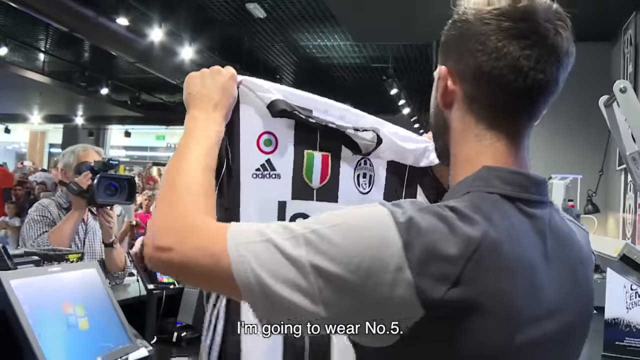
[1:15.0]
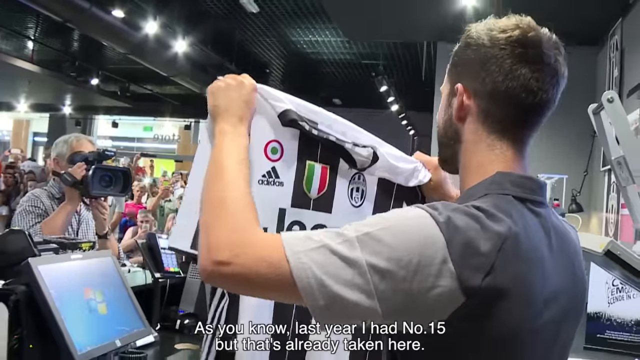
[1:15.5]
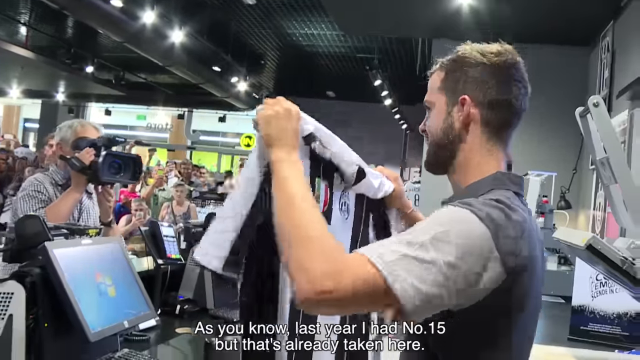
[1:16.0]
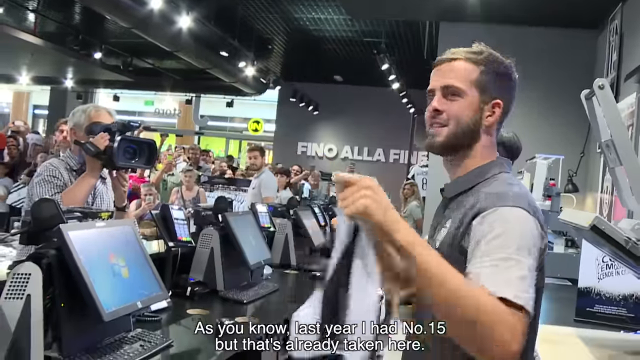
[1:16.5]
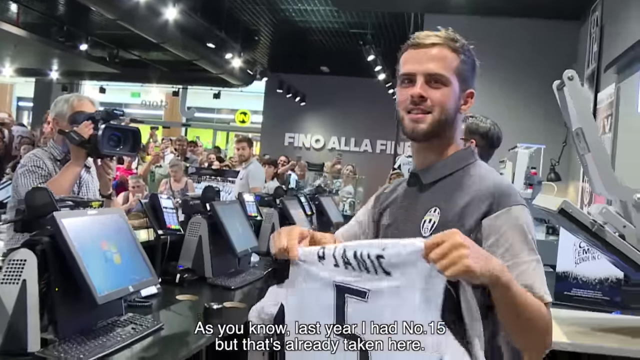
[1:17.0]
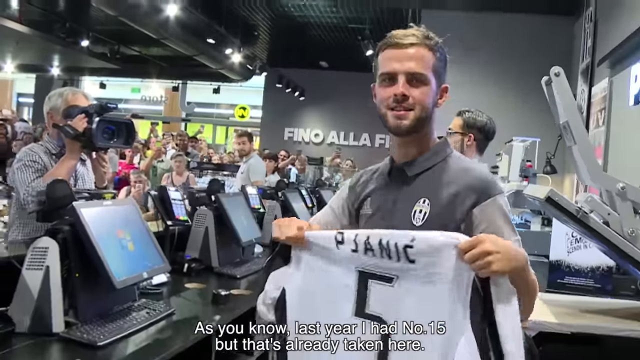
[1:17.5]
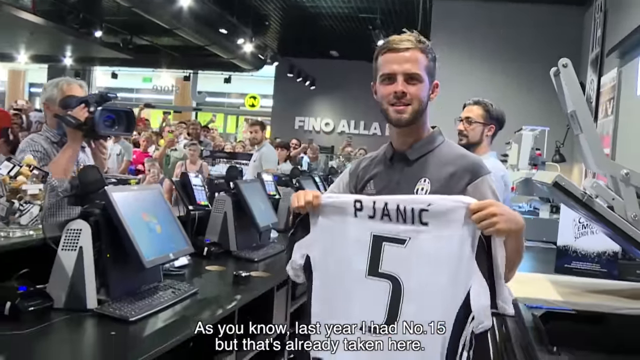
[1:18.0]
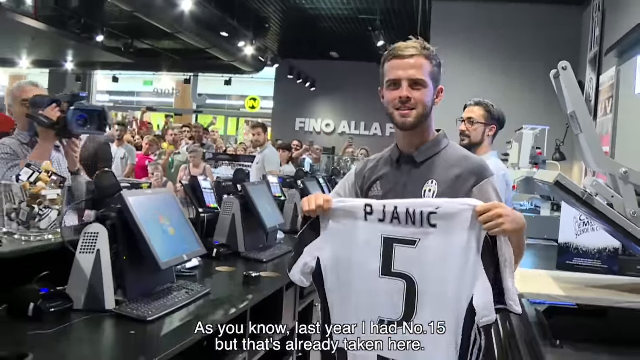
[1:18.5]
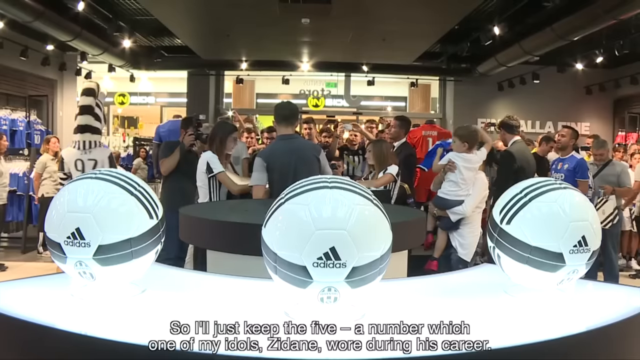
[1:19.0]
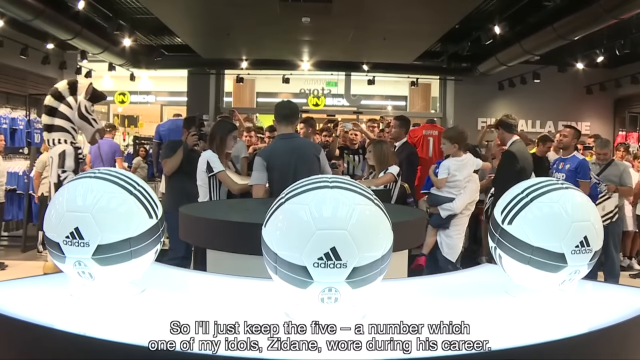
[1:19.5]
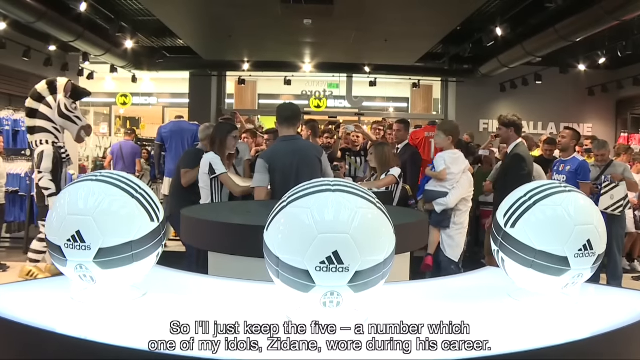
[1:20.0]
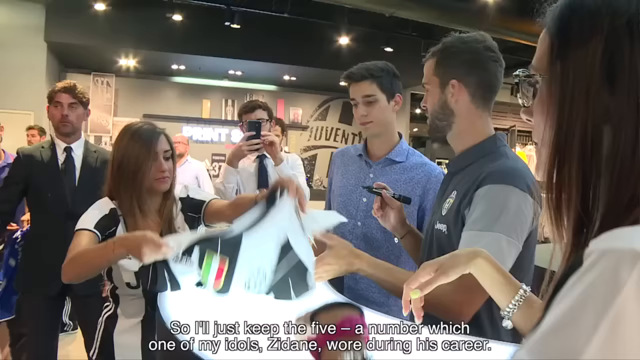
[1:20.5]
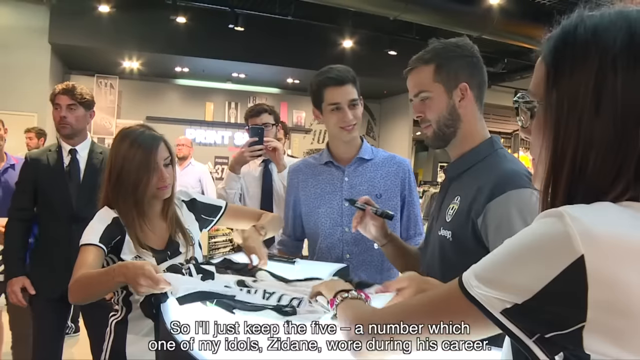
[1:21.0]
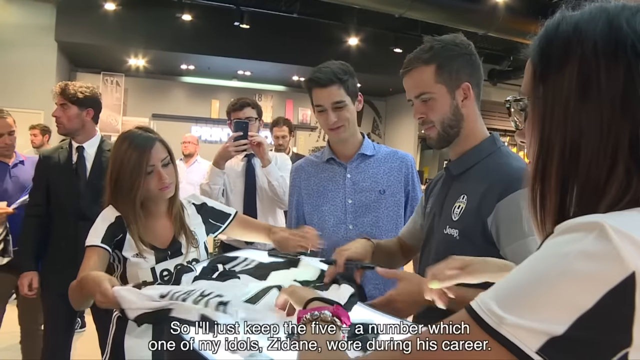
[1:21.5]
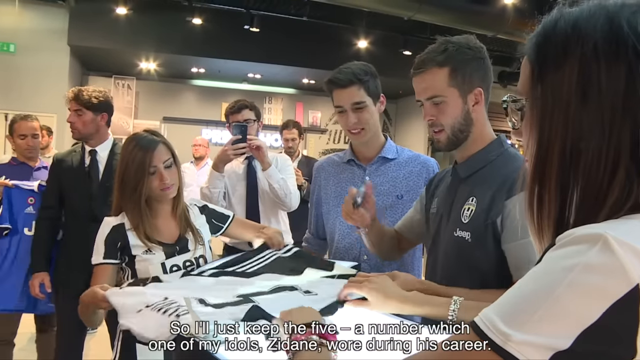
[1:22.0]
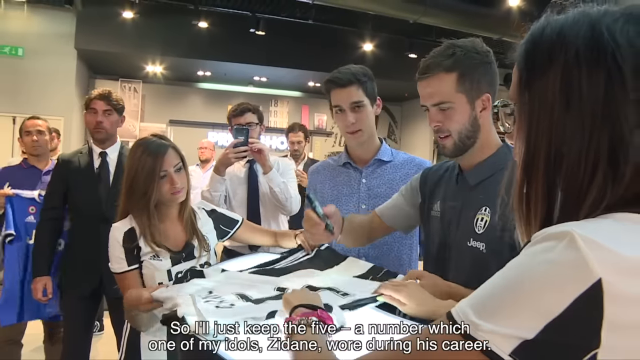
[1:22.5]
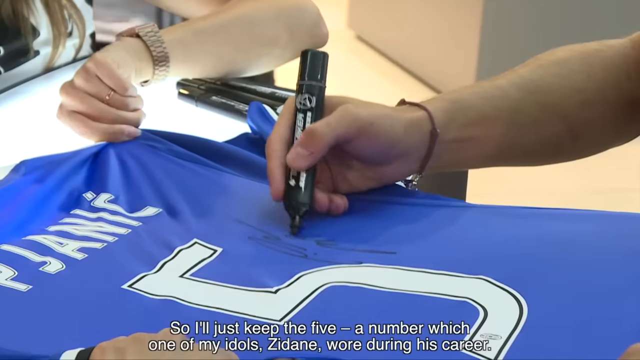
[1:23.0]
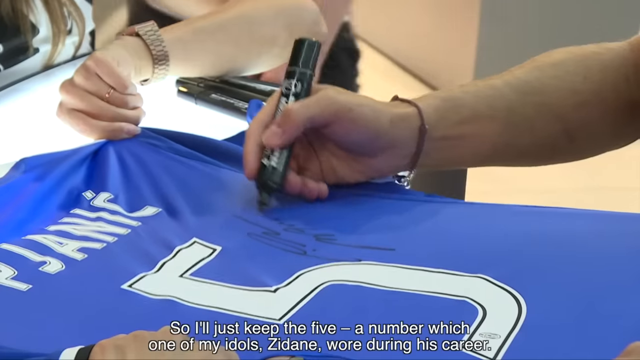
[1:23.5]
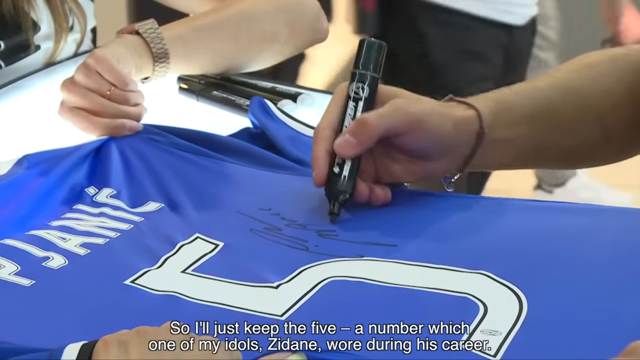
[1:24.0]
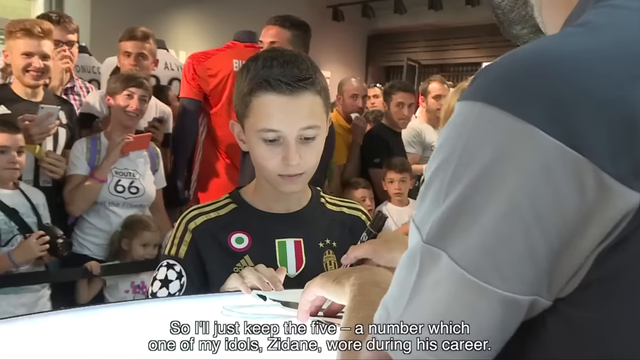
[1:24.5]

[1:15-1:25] Indoors, the soccer player holds up a white jersey that has a Jeep logo and an Adidas logo on the front and appears to also have an Italian flag on it. He holds it up with both hands, apparently to show the media. Media members holding large cameras take photographs and videos of him holding the jersey. The jersey shows the last word "JANIC" written on it. The man is then shown autographing jerseys for fans, and a little boy waits to get an autograph from him.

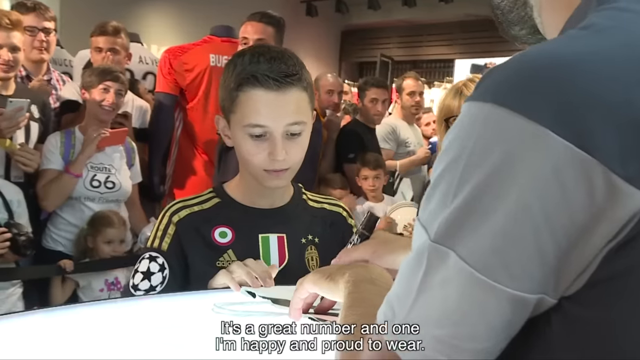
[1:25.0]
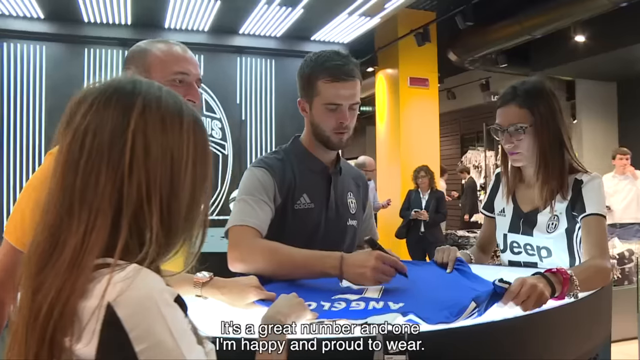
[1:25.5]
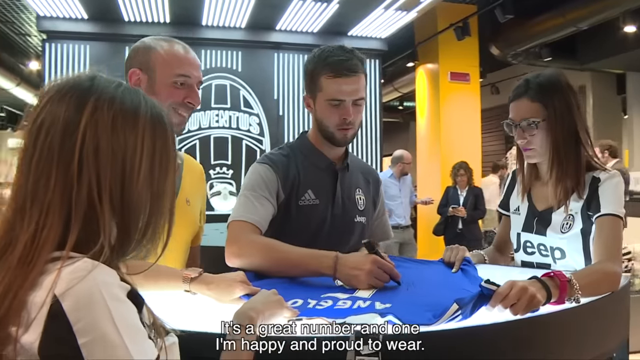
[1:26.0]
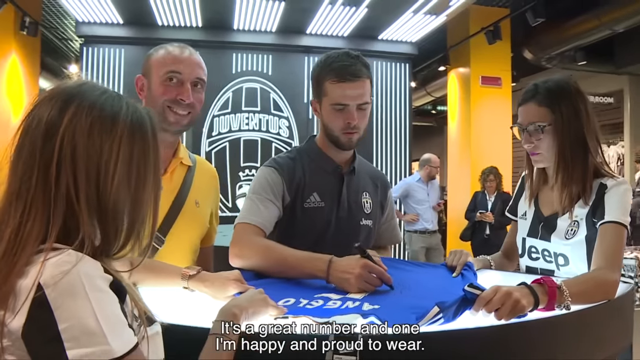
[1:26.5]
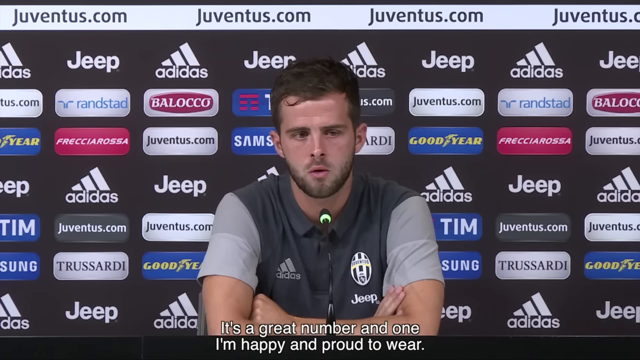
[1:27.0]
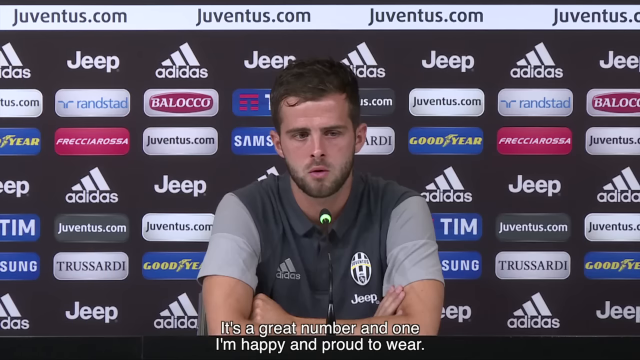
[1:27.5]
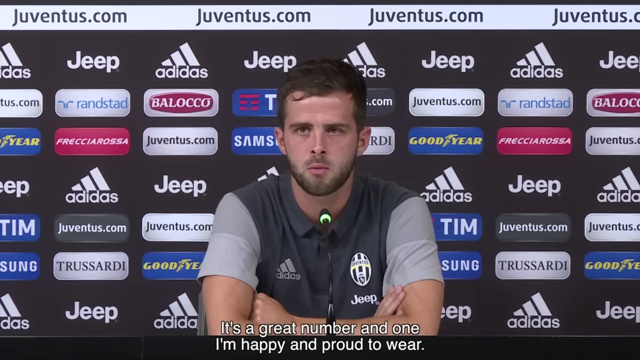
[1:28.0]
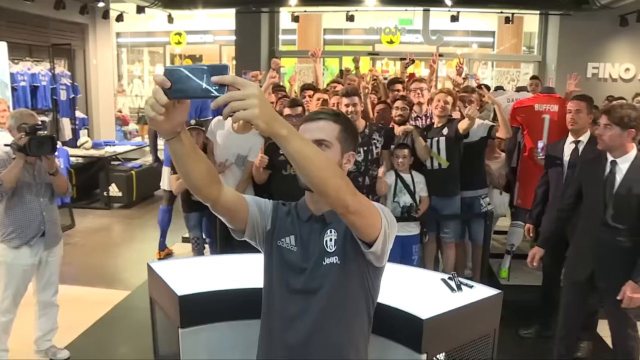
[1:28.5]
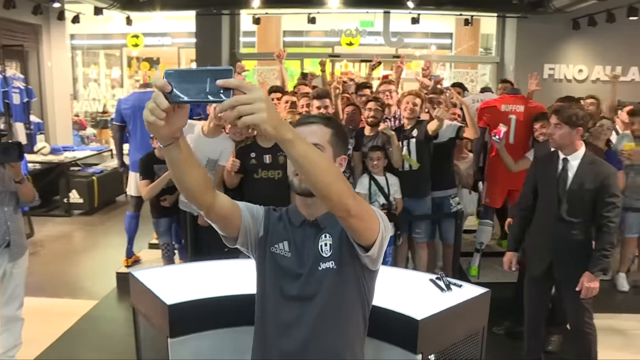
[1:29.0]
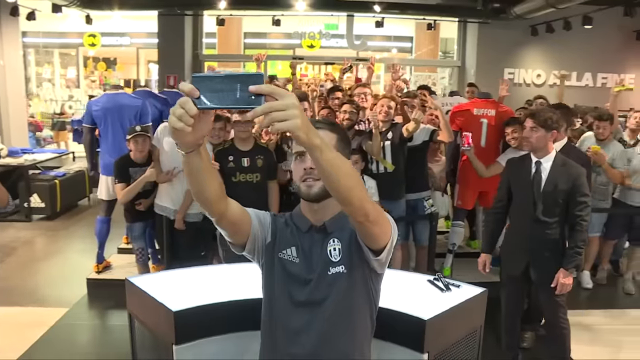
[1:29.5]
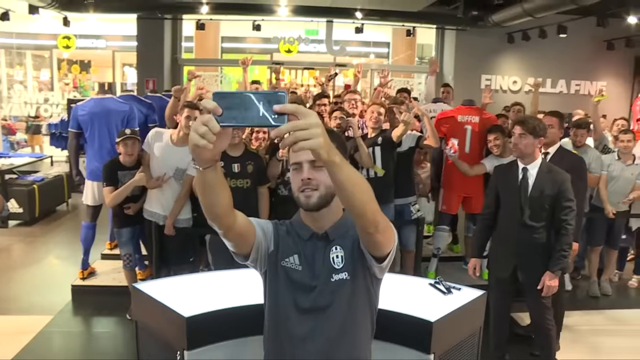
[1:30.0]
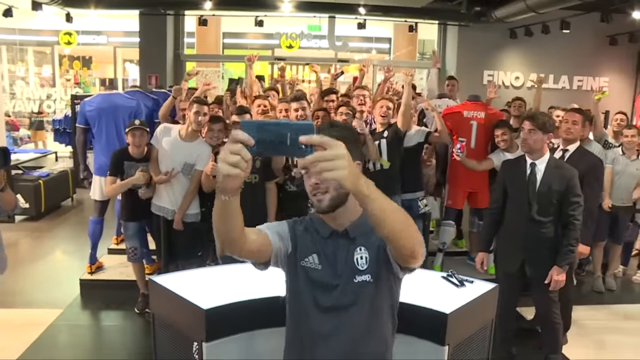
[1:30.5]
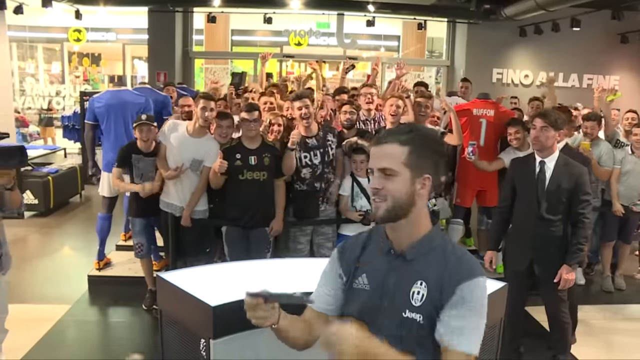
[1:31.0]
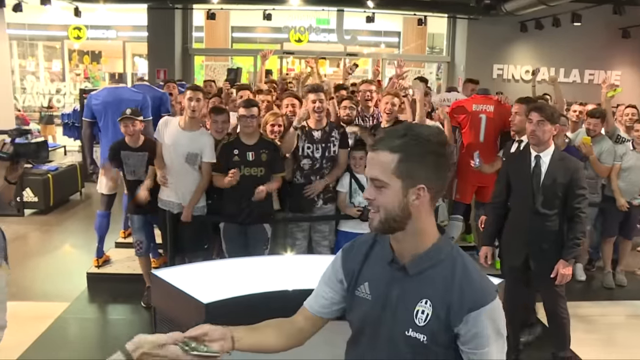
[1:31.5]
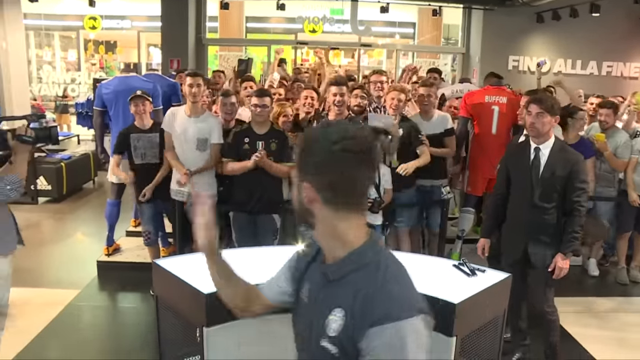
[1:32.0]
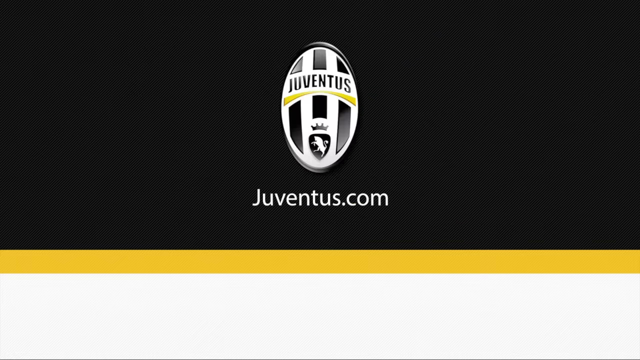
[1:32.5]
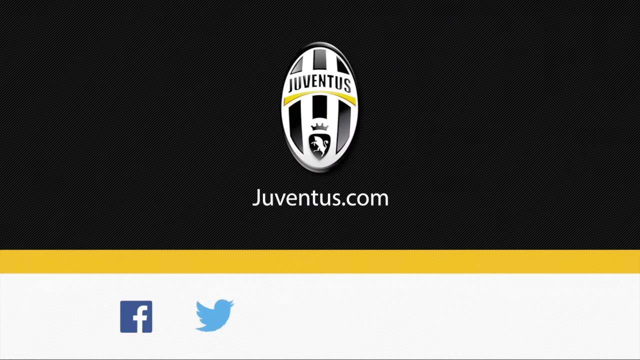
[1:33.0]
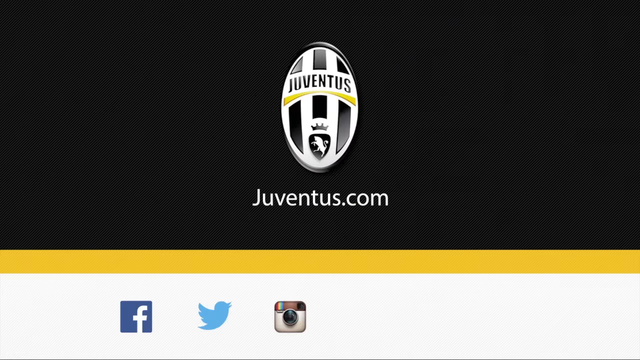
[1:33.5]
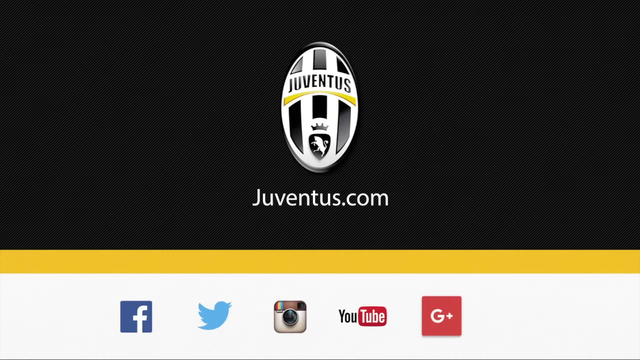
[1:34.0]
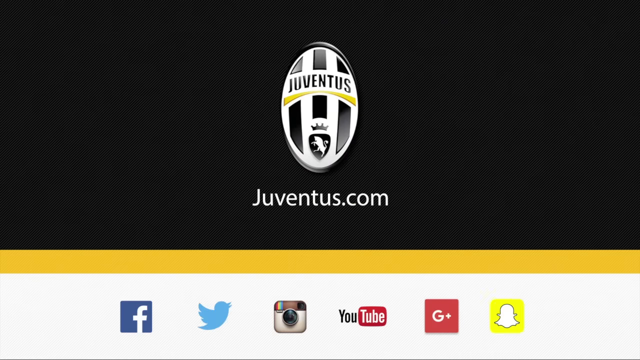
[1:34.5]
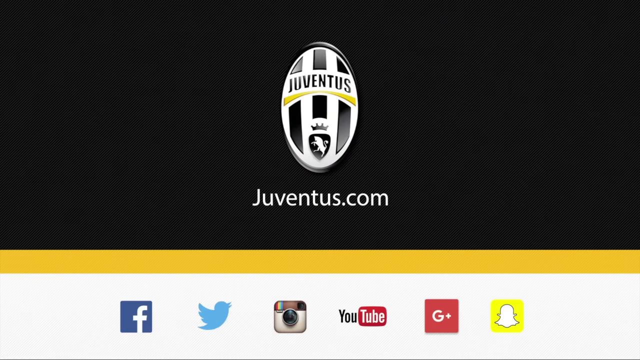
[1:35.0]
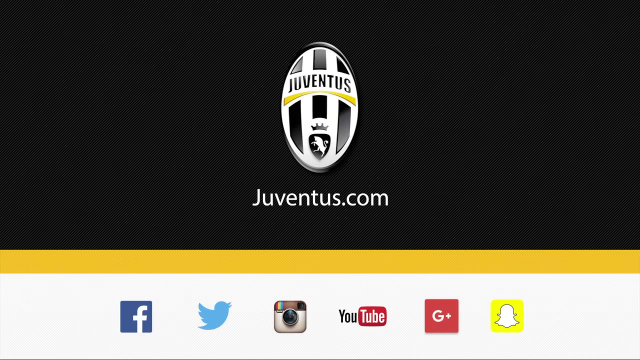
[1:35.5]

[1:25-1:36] Inside a building, the man signs autographs for fans, signing the backs of his jerseys; there are white jerseys and blue jerseys. He signs an autograph for a young boy and one for a woman. After a few seconds, the video shows him back at the press conference talking to reporters, then returns to the autograph signing, where he seems to take a selfie with all of his fans in the background. The screen then turns black with a yellow stripe; in the middle it says "Juventus.com", and a large white, black and yellow Juventus logo is above that.